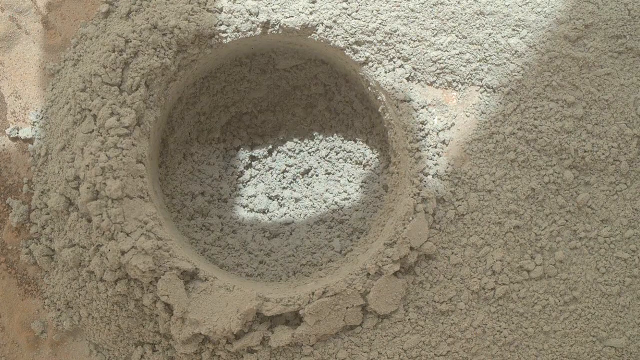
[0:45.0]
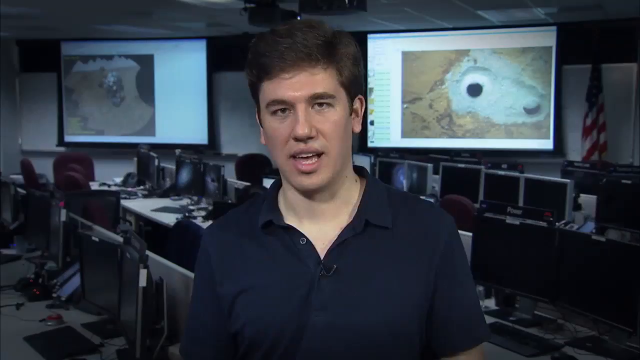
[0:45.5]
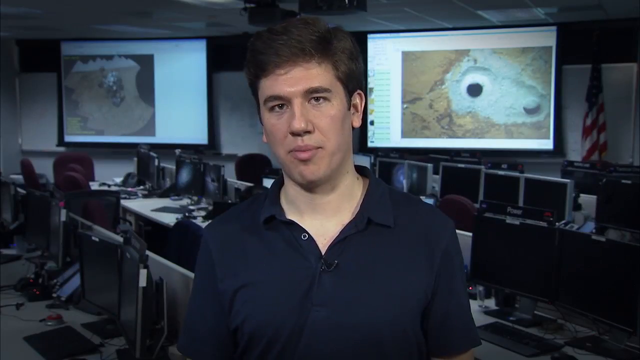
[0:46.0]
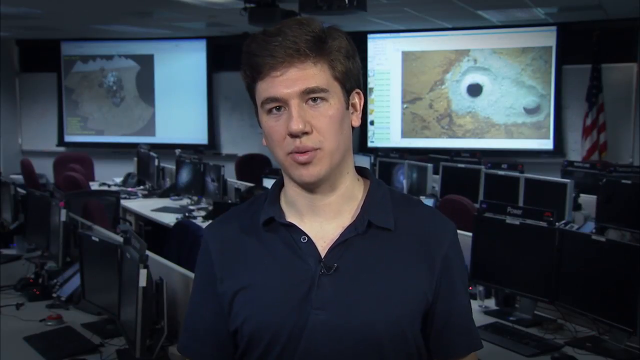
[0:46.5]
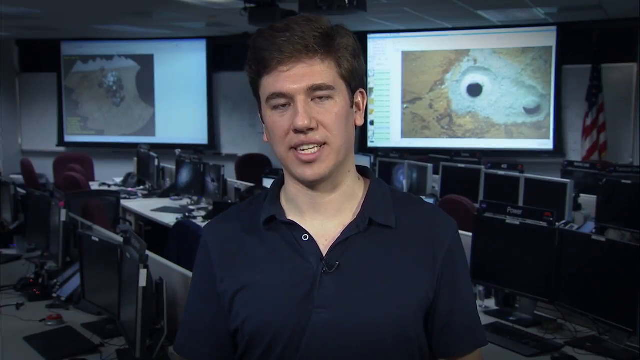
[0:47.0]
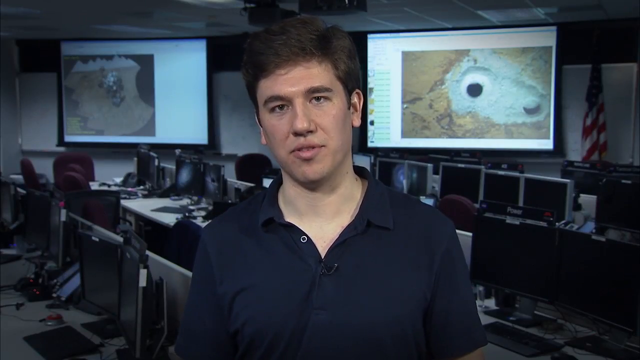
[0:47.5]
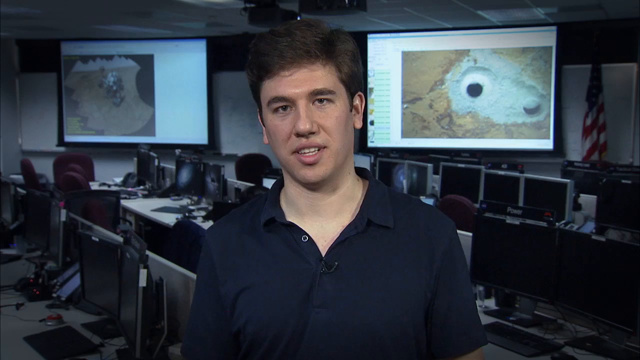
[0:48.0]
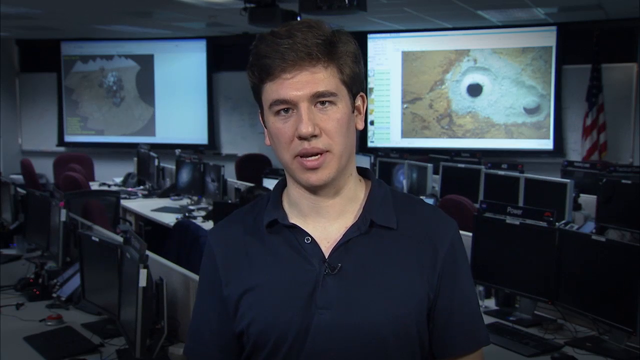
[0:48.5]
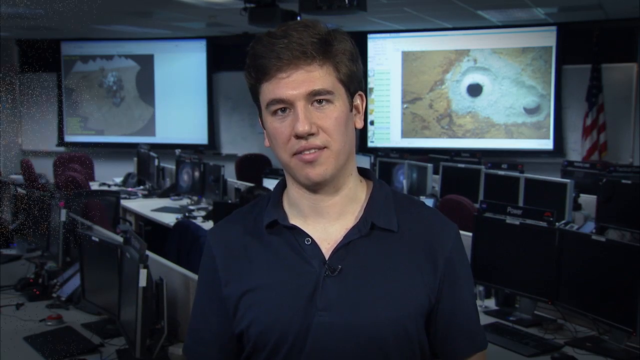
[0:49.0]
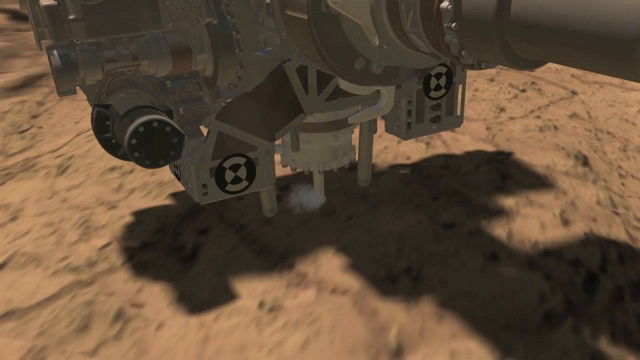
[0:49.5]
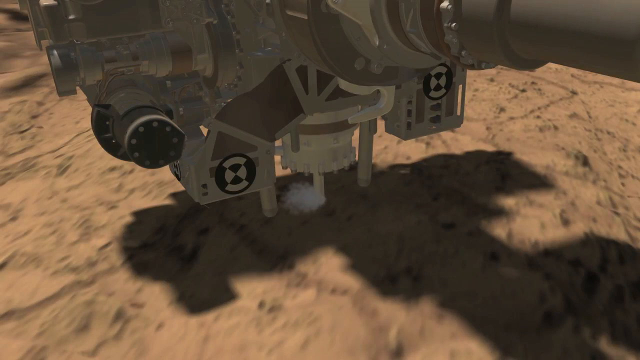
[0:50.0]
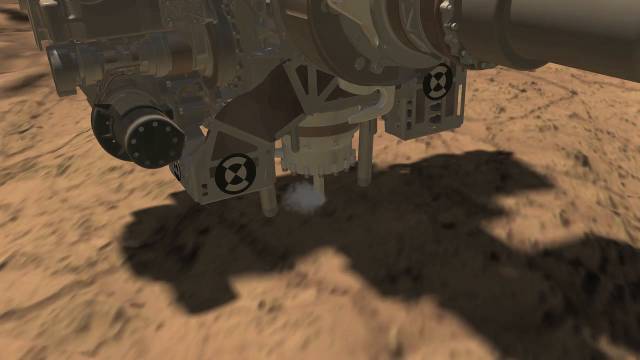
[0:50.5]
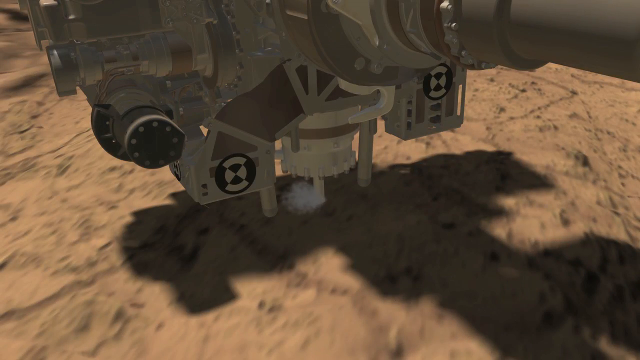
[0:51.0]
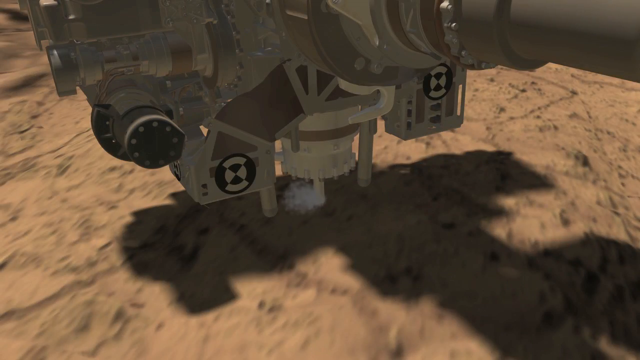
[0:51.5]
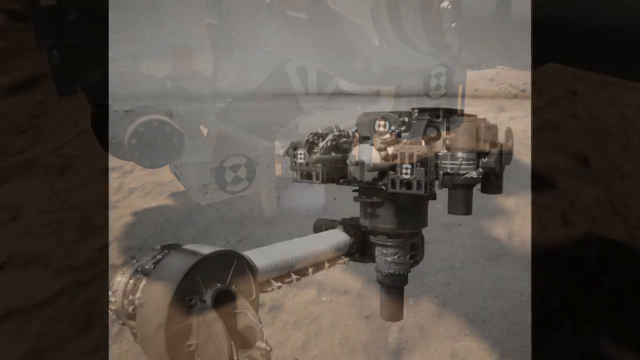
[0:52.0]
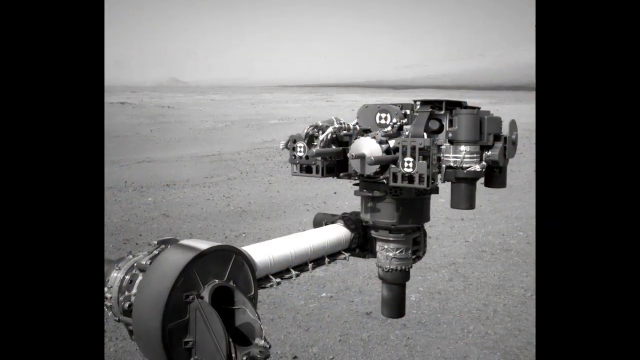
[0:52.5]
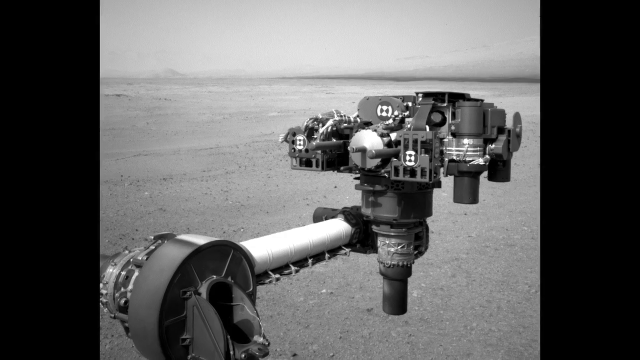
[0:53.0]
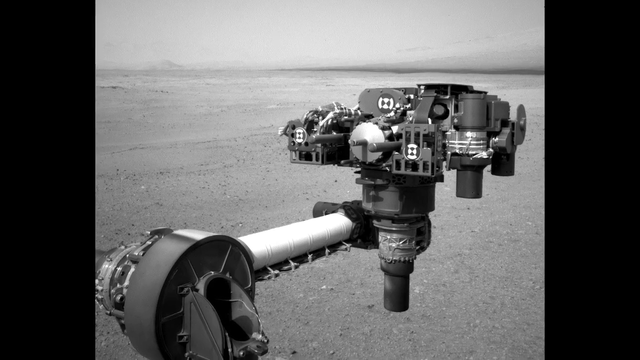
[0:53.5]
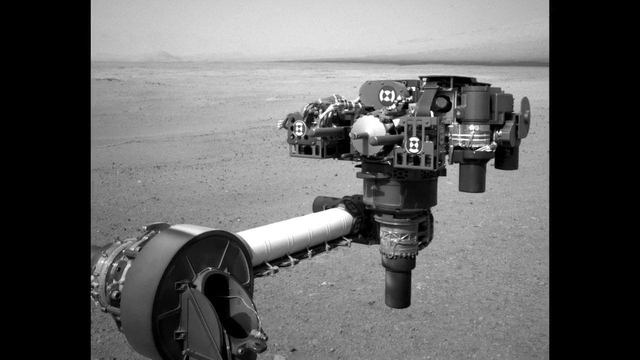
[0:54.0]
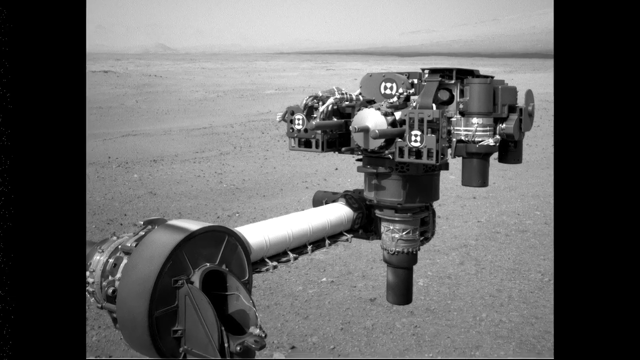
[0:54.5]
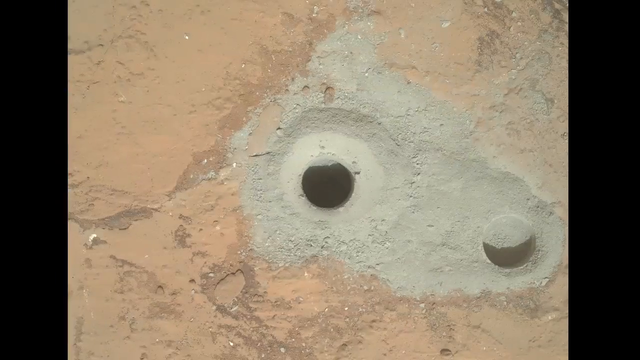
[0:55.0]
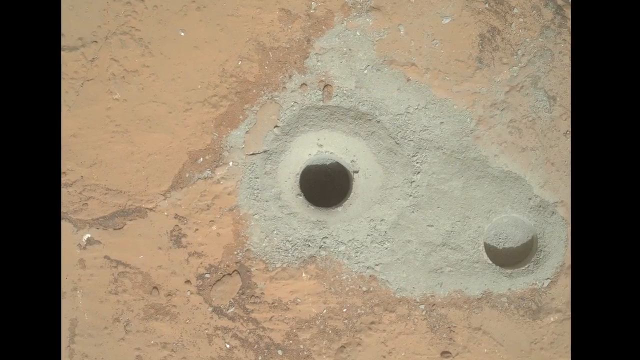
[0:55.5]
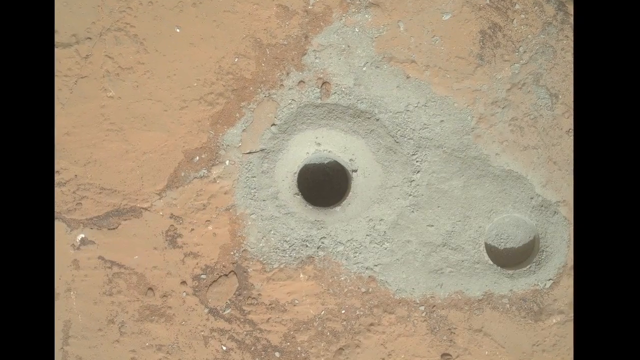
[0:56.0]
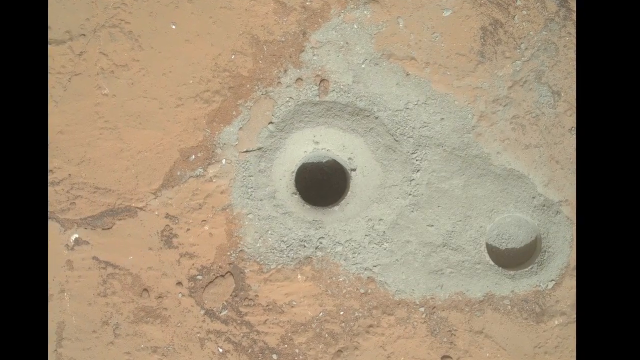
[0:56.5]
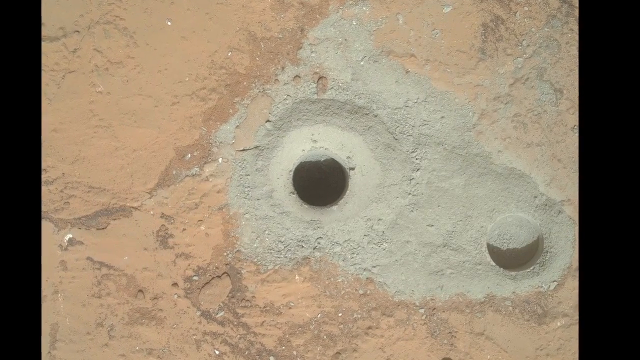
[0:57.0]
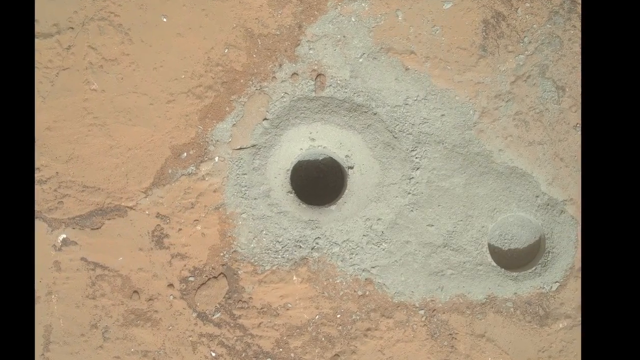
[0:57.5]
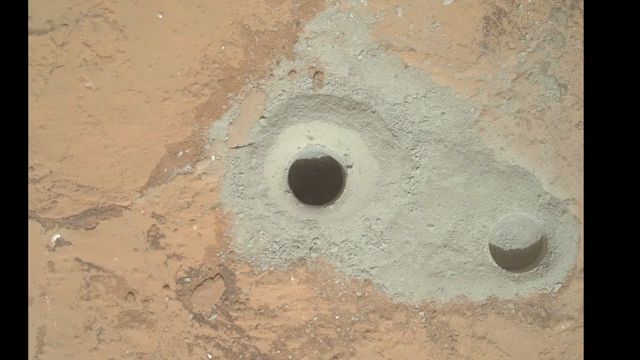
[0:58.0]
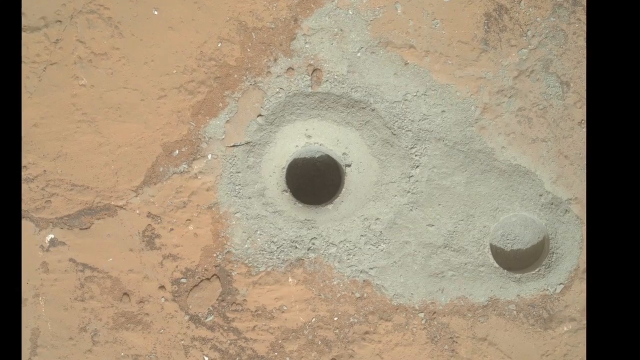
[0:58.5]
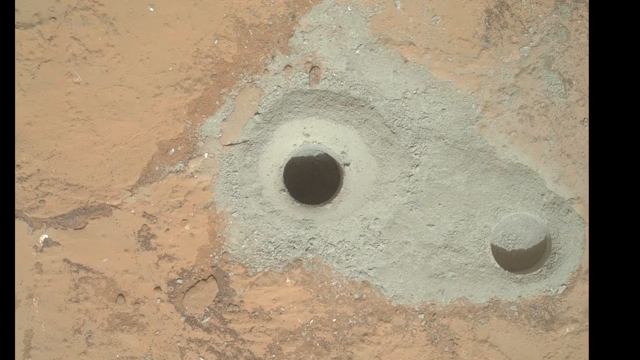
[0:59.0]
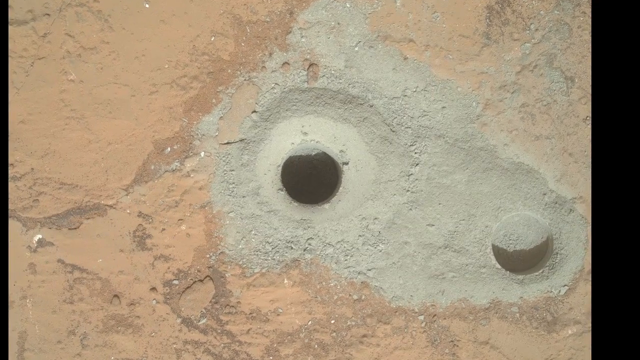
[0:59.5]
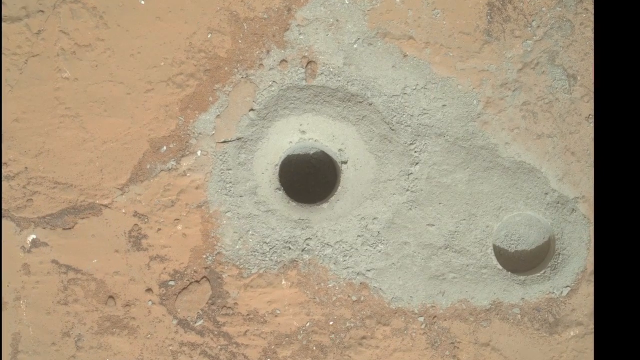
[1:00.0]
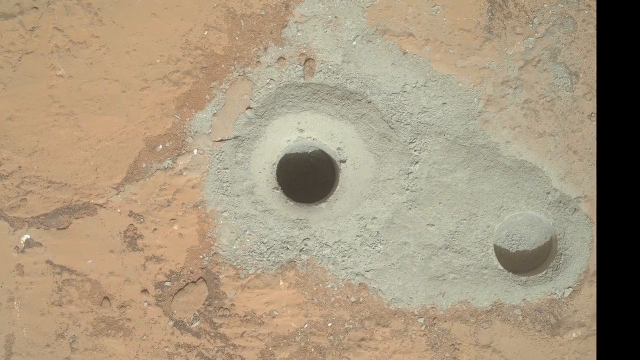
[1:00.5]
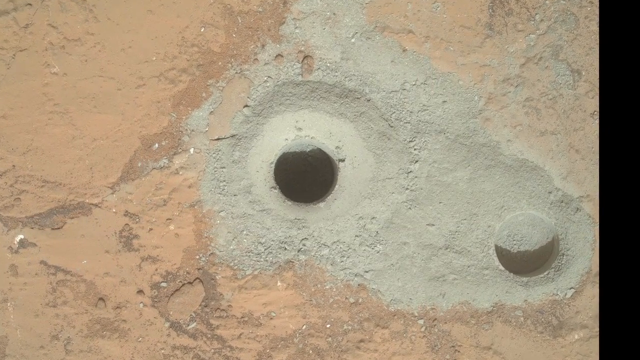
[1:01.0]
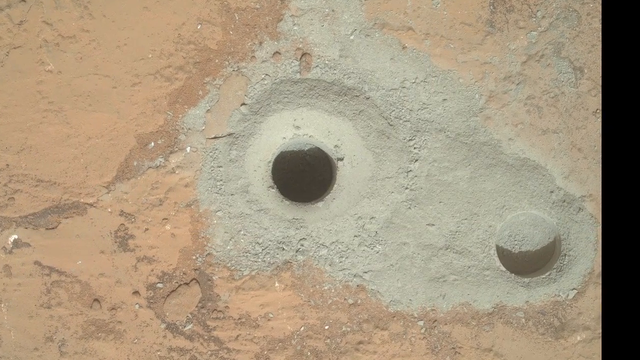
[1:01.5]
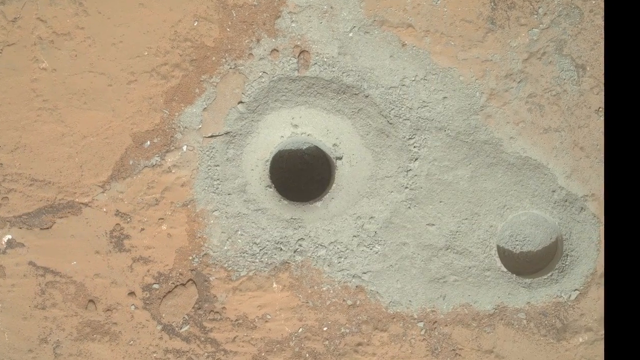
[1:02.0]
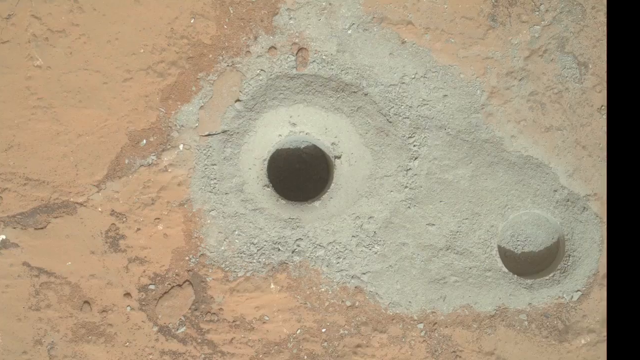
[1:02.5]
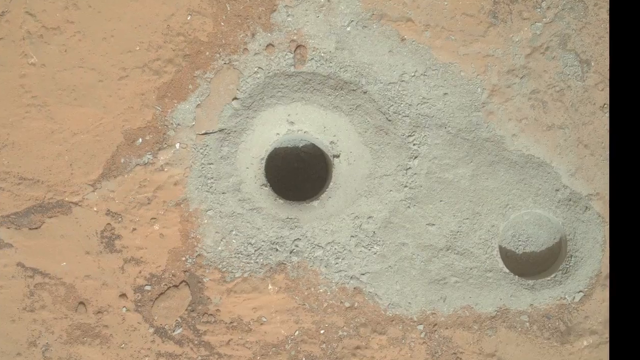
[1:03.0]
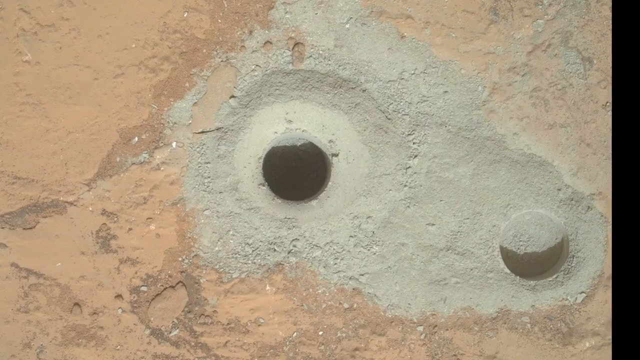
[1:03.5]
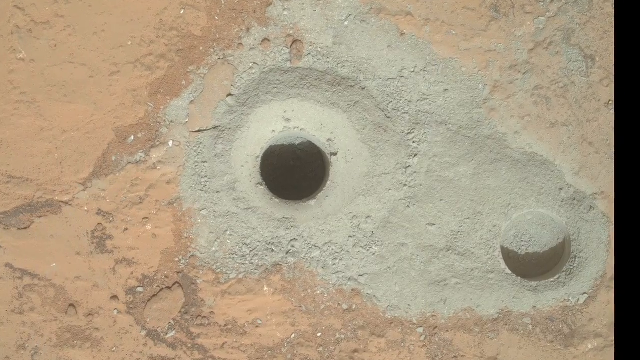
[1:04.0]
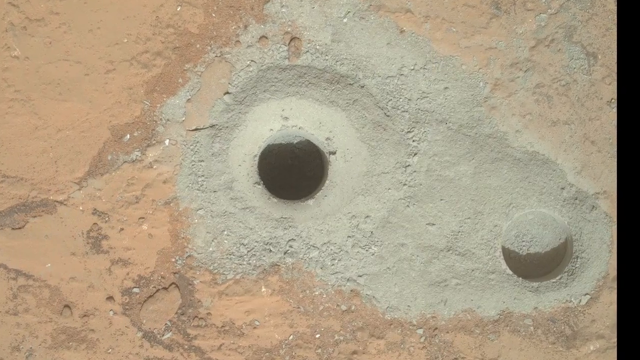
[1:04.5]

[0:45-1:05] The scientist appears on screen, seemingly explaining. Another recreation of the equipment follows: first a computer-generated image of the surface being drilled, then photo slides of drillings on the surface, which look somewhat like core samples. The holes are very dusty from the drilling. The scientist then appears on screen again in the same laboratory, apparently explaining more.